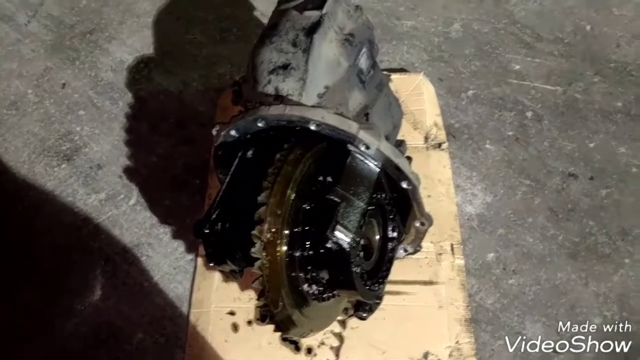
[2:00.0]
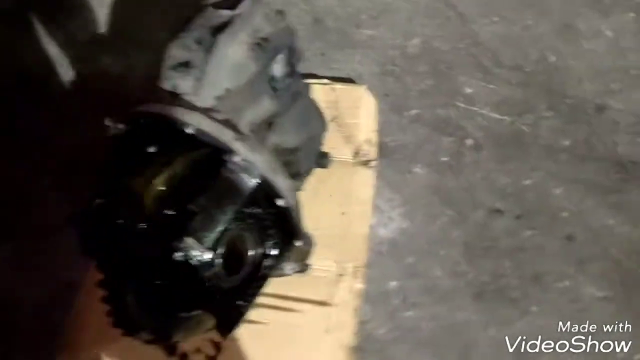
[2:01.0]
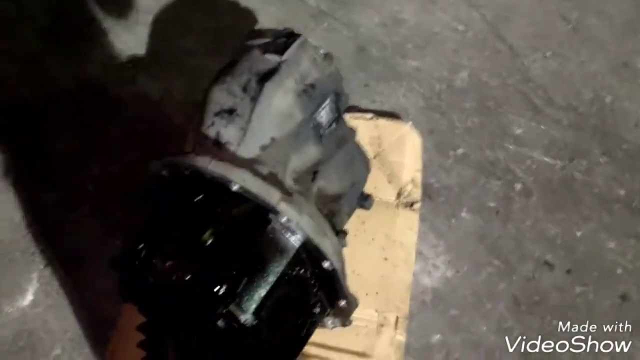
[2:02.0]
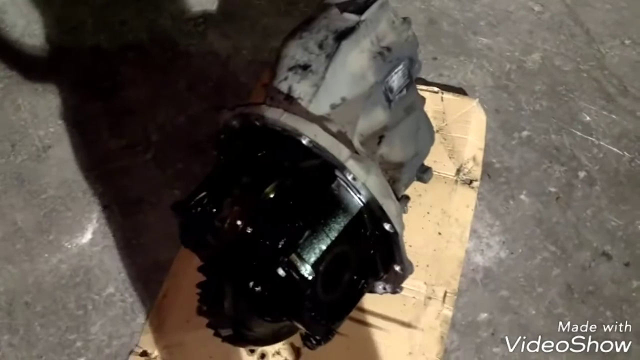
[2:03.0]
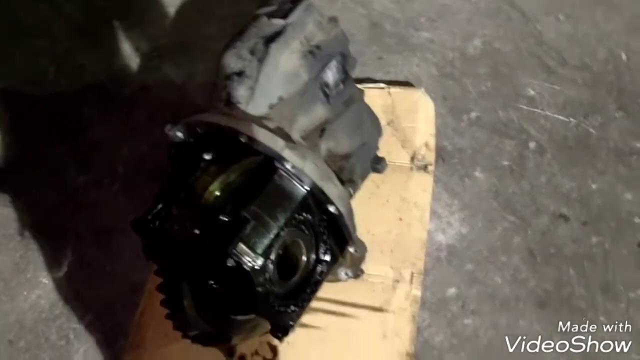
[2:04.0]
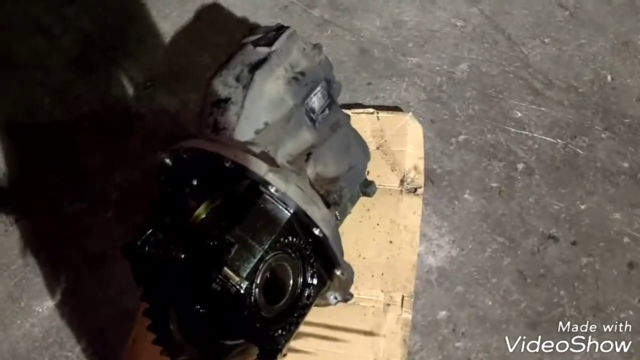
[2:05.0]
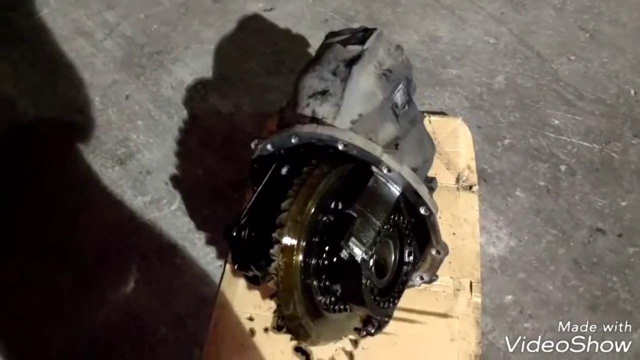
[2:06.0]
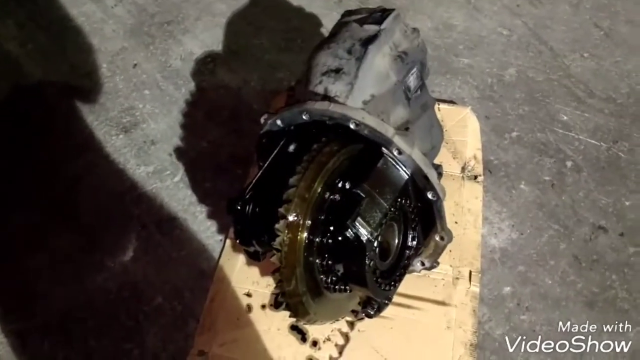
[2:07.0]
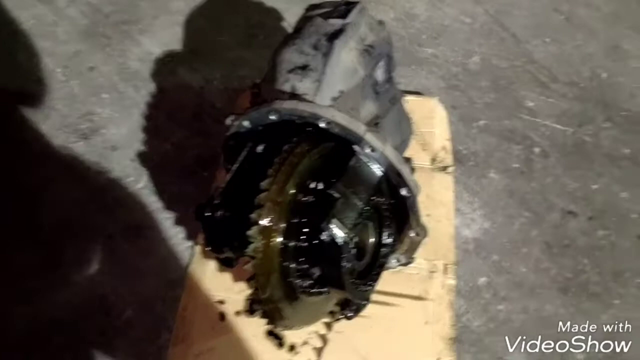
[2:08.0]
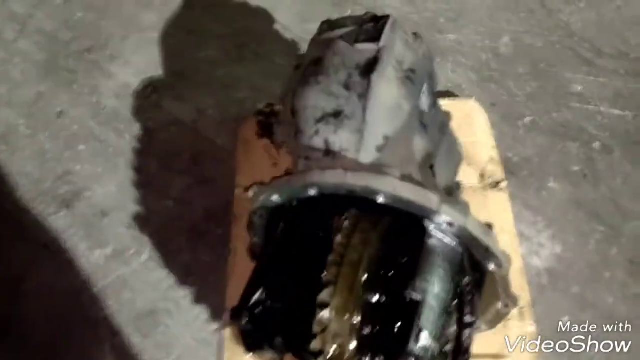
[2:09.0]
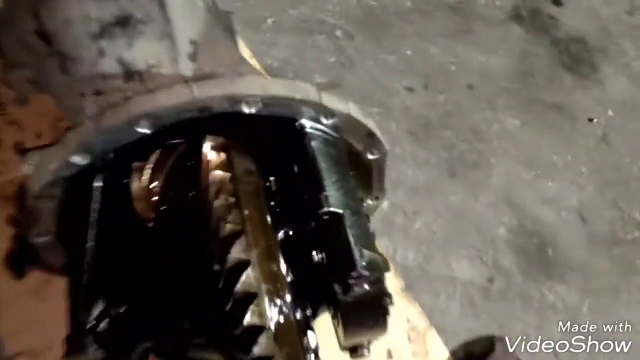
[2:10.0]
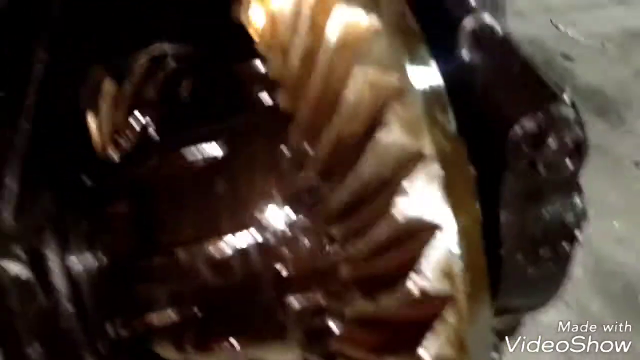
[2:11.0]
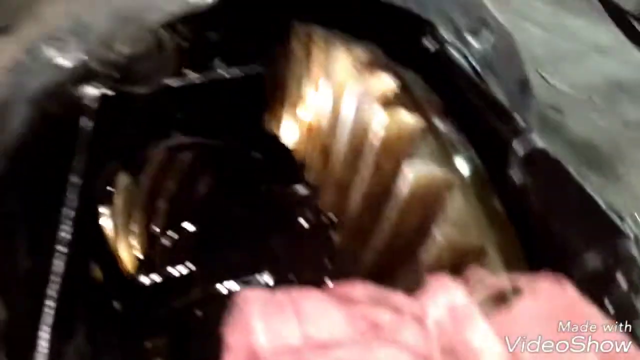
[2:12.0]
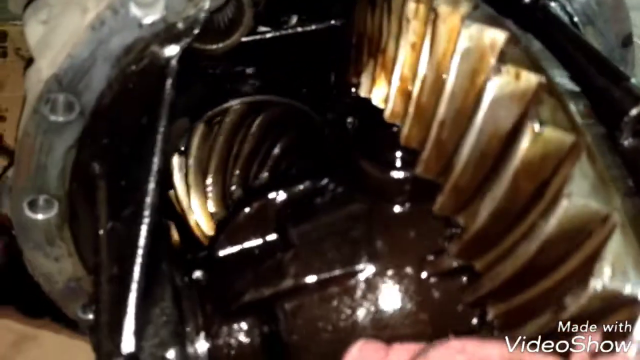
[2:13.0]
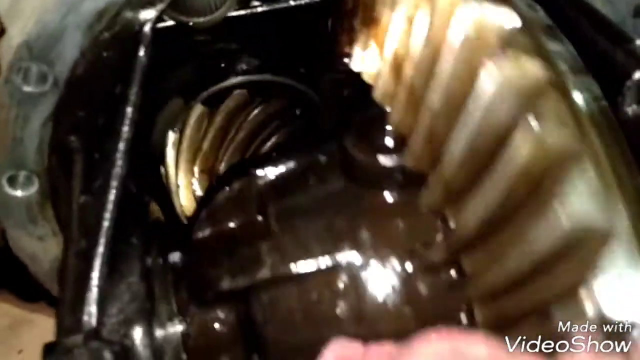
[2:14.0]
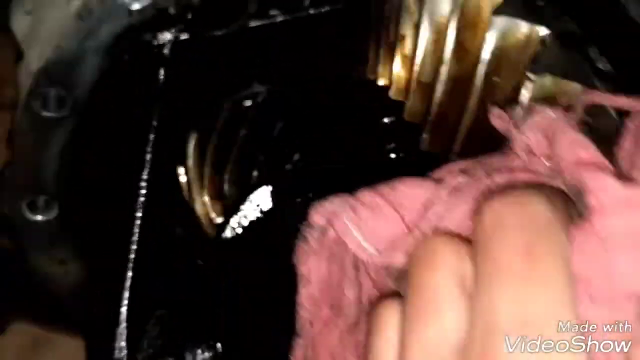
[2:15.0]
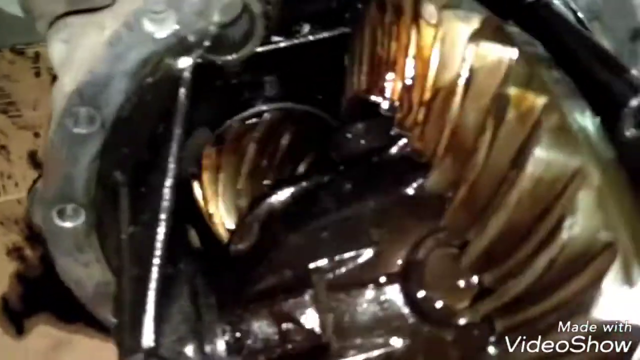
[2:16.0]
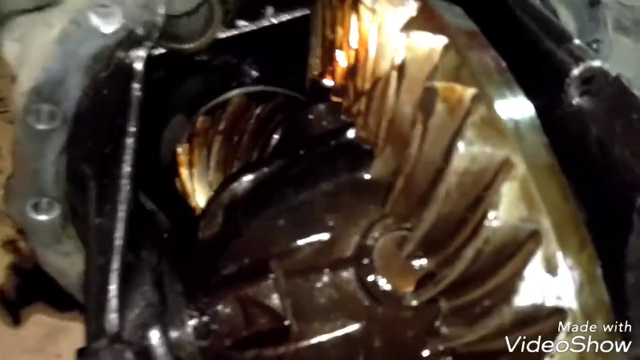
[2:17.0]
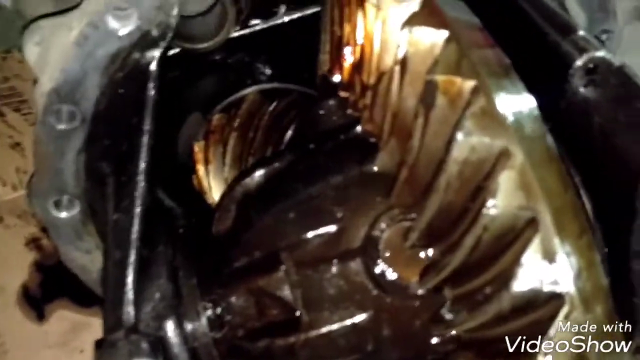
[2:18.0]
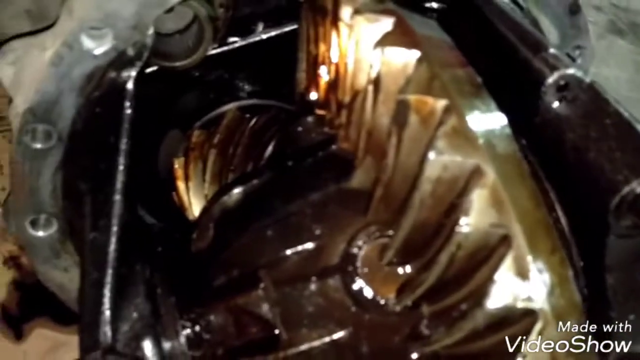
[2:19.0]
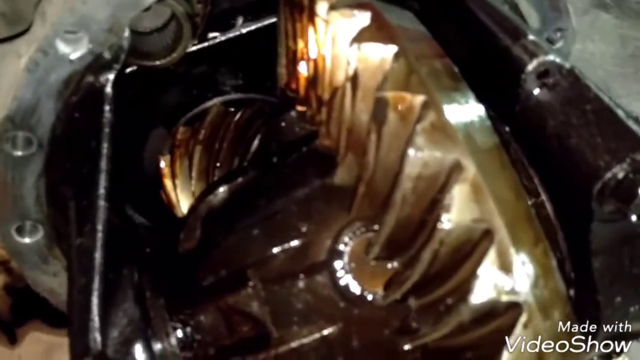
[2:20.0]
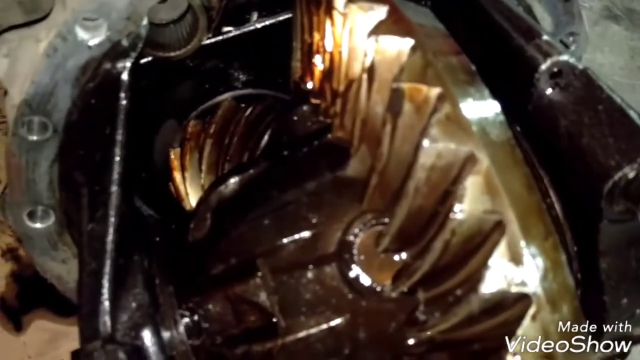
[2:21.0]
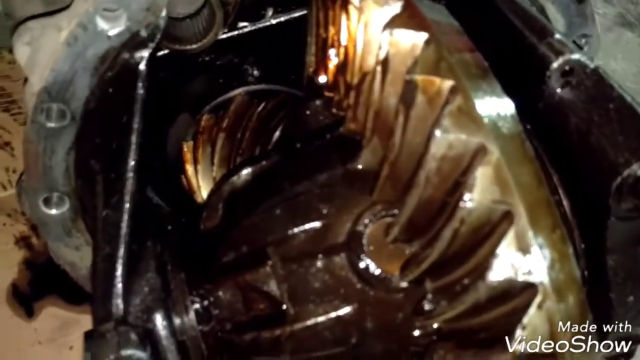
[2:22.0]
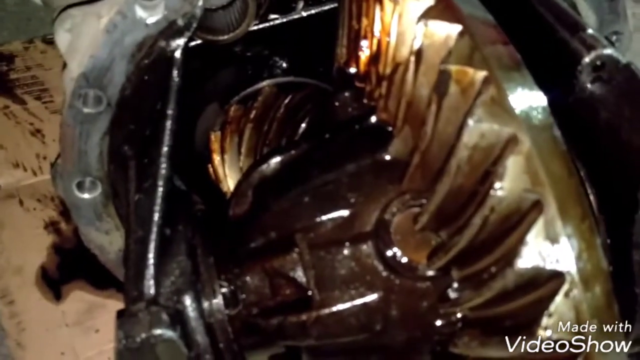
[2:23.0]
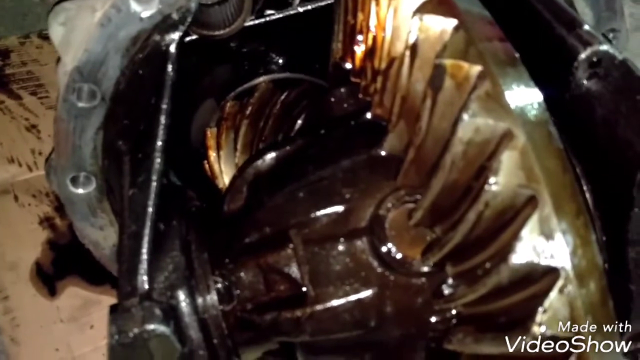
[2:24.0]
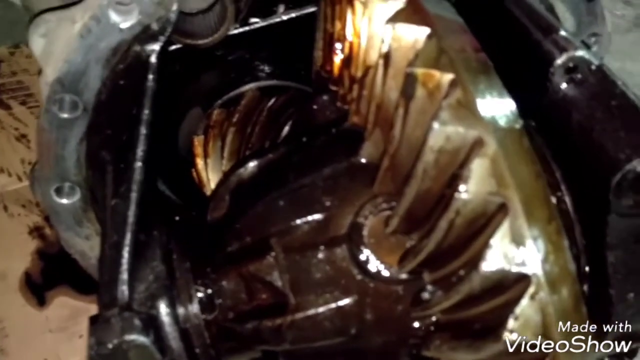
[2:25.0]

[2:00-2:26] A person walks around looking at a piece of equipment that appears to go inside a vehicle. Its body appears to be cast iron, and inside are two toothed iron wheels; it is oily inside. One wheel is considerably bigger than the other, and the biggest one protrudes out of the body. The person uses a shop rag to spin the largest wheel, showing that the wheels are connected by their teeth and move together. The edge of one wheel faces the camera, while the other is seen directly face on with its teeth around it. The inside is shiny and oily, shown in close-up. Then the view goes around the side, where a hole is pointed out.